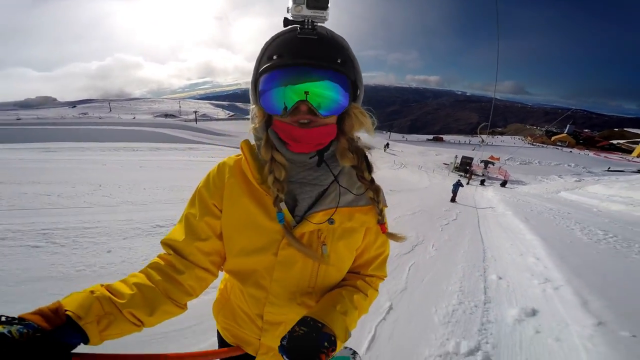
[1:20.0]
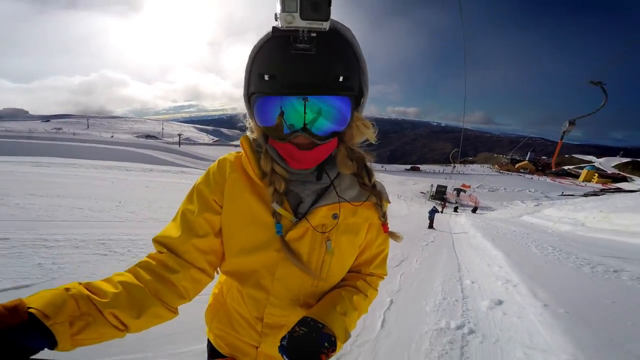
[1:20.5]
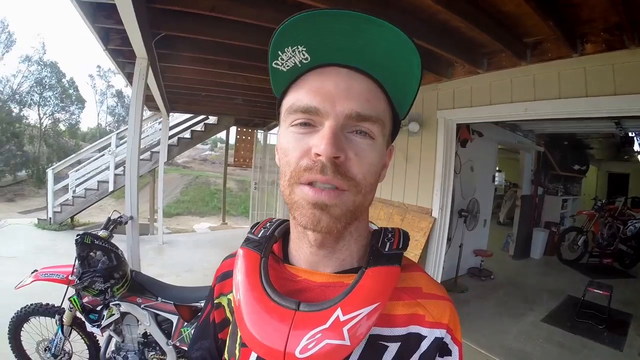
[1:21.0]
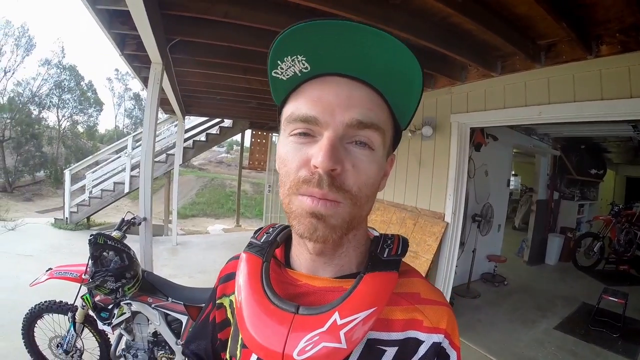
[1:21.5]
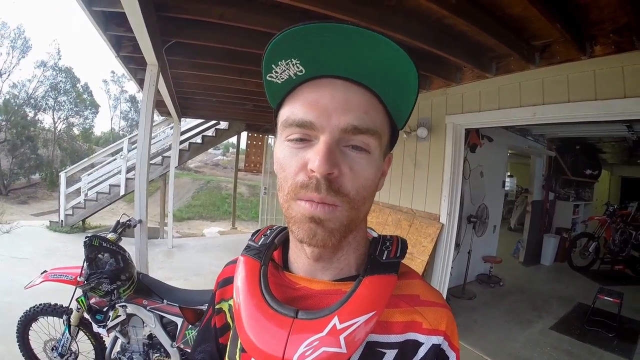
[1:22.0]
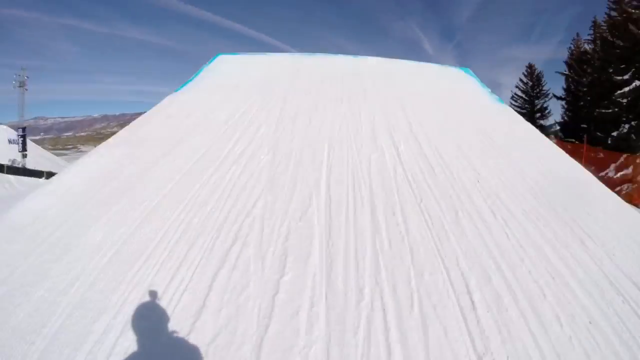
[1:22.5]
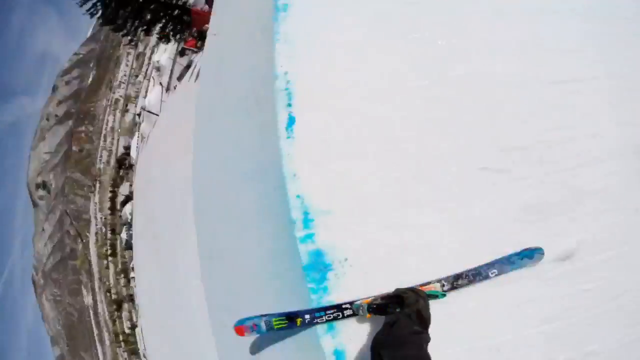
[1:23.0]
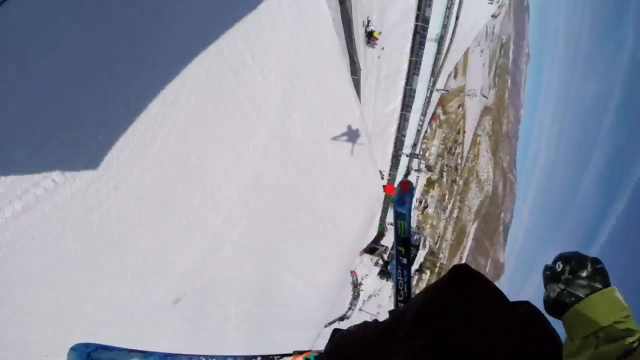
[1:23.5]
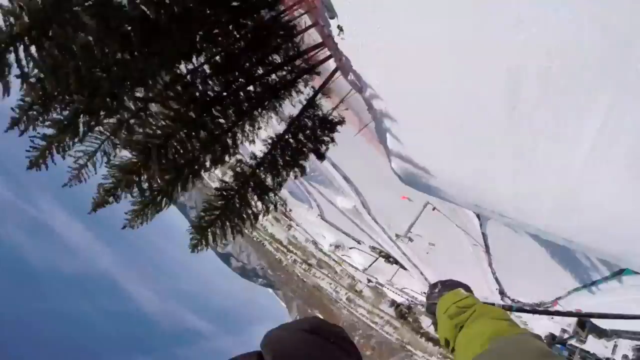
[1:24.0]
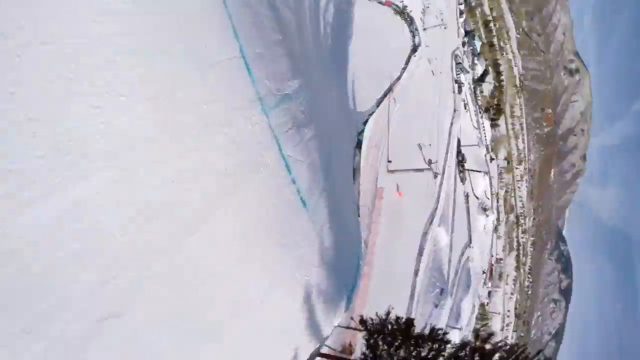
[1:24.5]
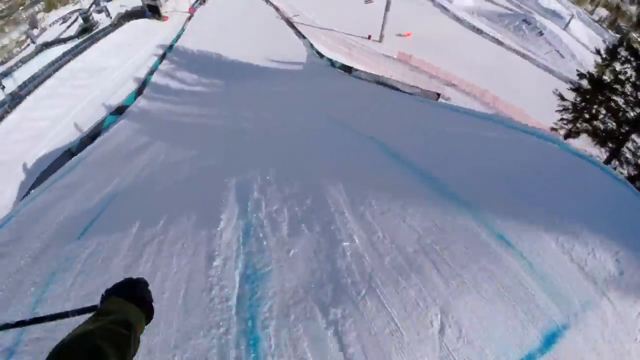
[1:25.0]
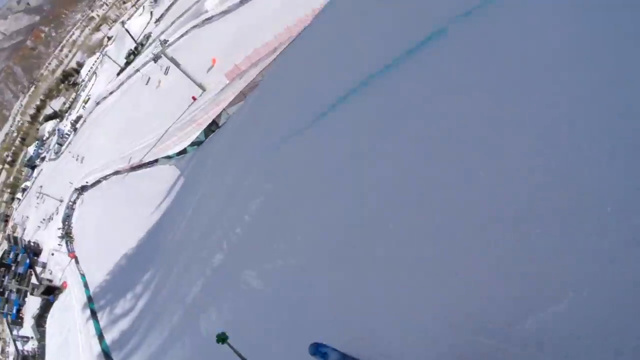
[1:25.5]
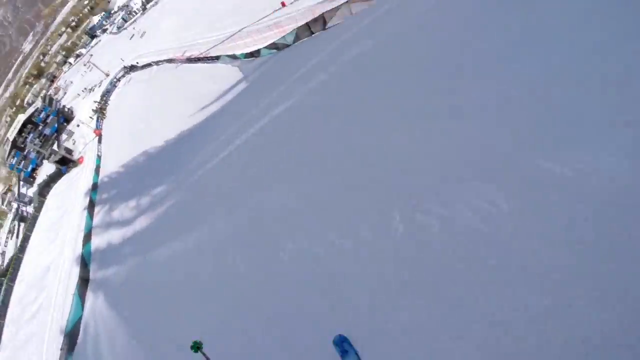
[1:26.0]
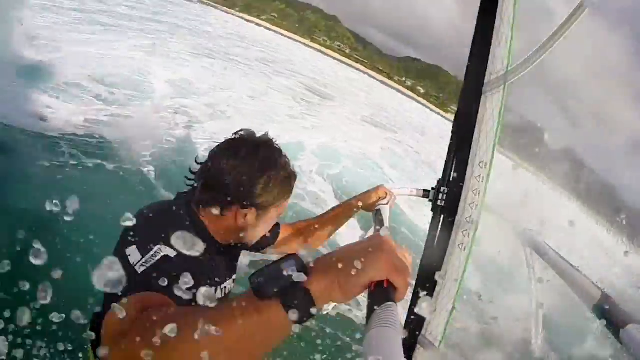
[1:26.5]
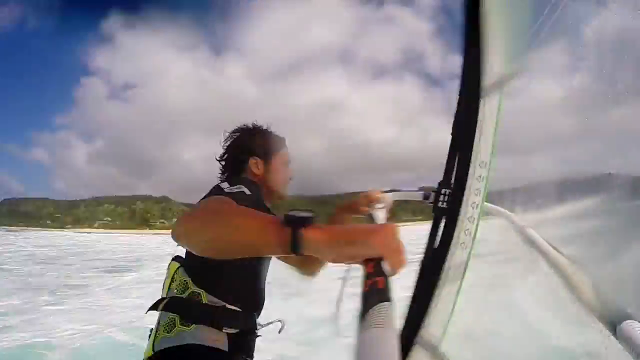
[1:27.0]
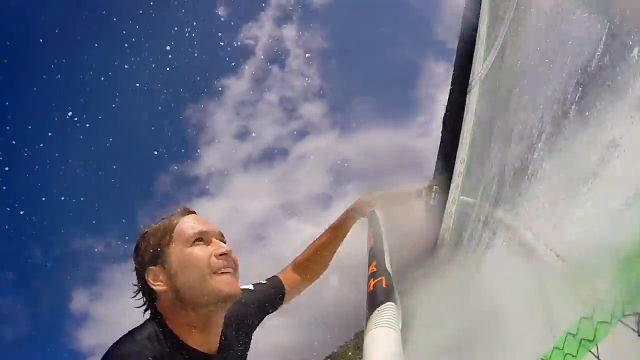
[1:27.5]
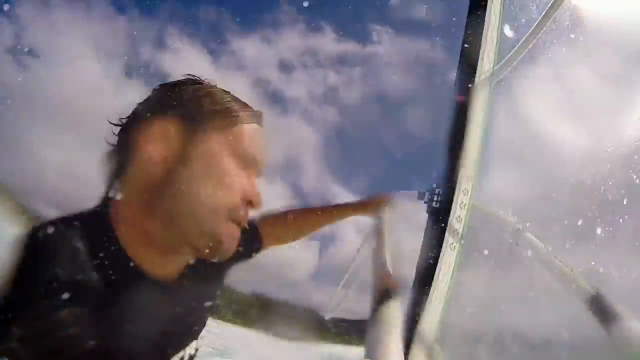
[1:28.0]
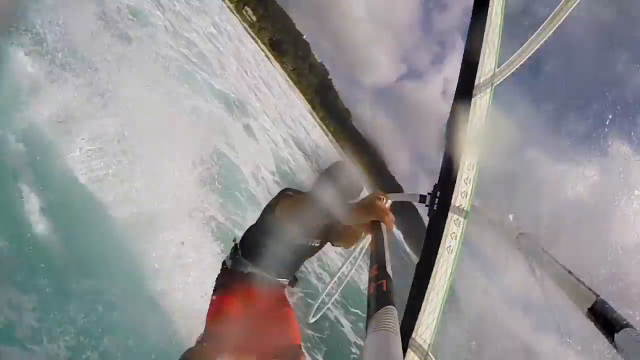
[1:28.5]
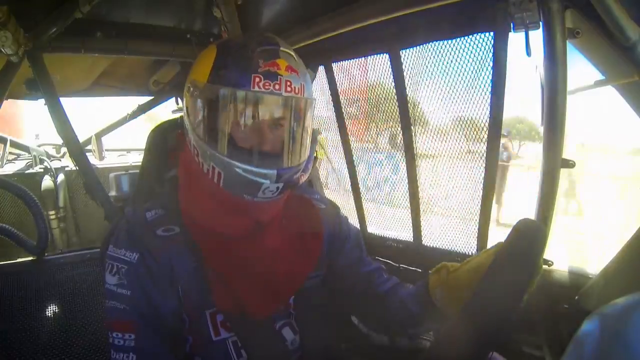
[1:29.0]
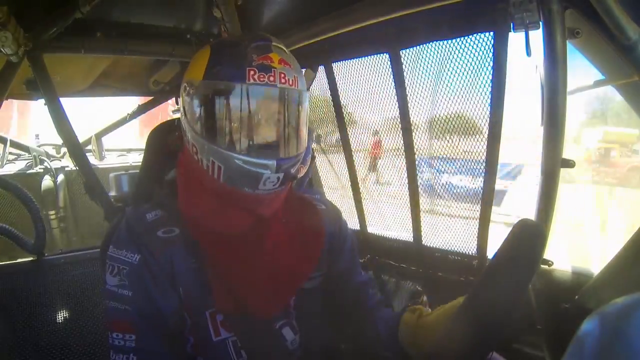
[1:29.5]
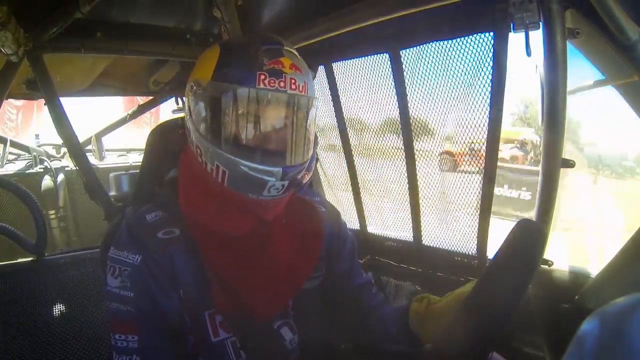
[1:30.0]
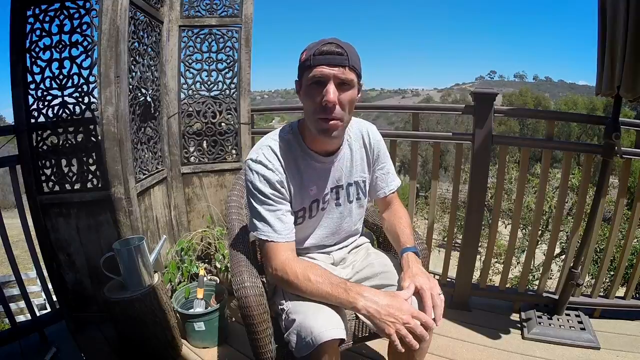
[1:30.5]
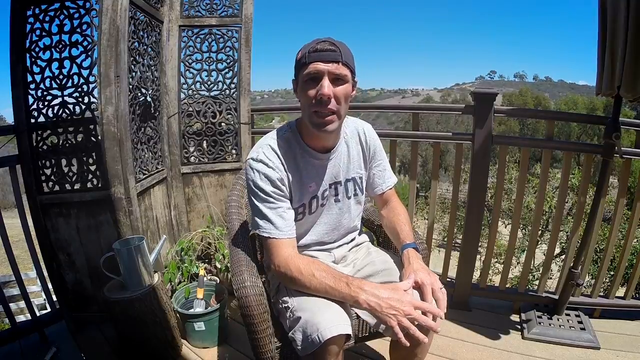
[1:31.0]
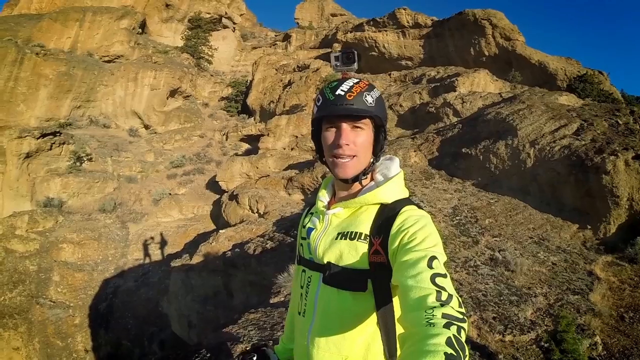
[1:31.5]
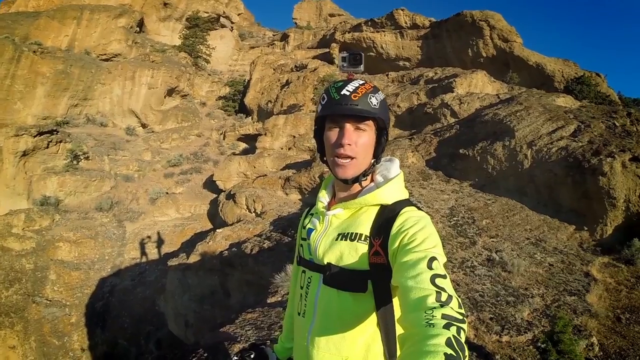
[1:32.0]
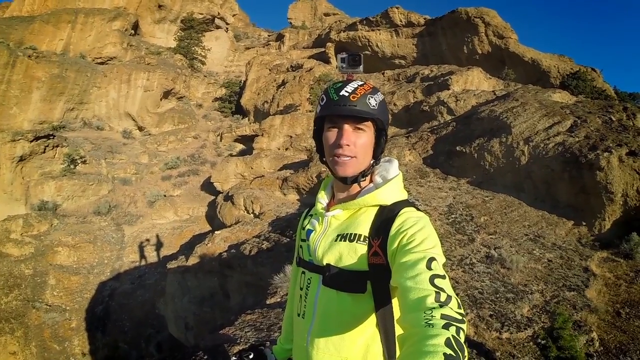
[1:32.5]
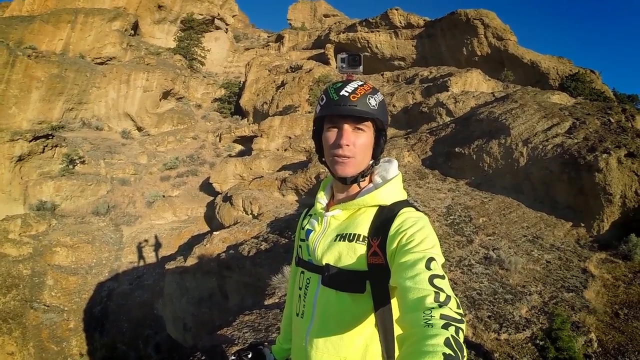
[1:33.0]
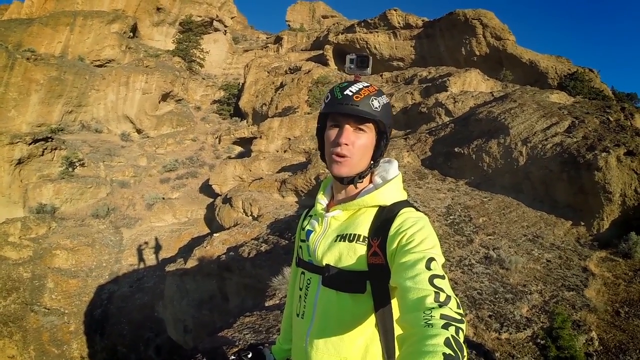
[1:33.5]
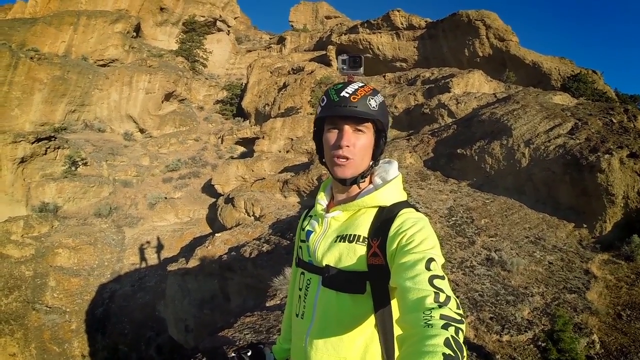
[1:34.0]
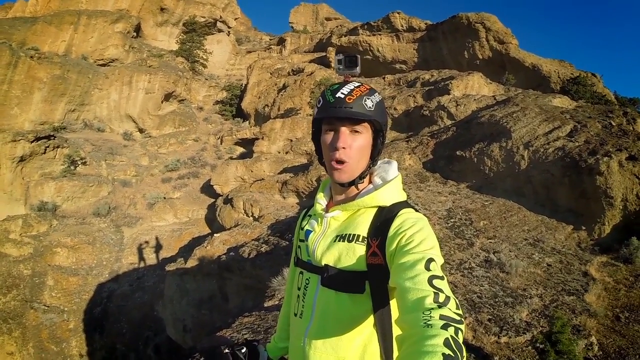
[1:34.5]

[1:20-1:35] The snowboarder and the dirt motorbiker appear; he wears a green and black hat. Back on the slopes, the skier goes up a ramp and, from their point of view, does something like a somersault into another downhill ramp. The paragliding person gets very wet, with the camera right by his side, as he is hit by the waves. The professional sports car racer is in his sports car, and a POV shot like a dash cam shows him racing. Then people talk to the camera.